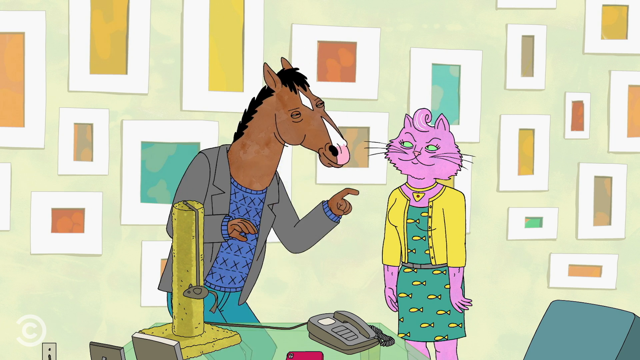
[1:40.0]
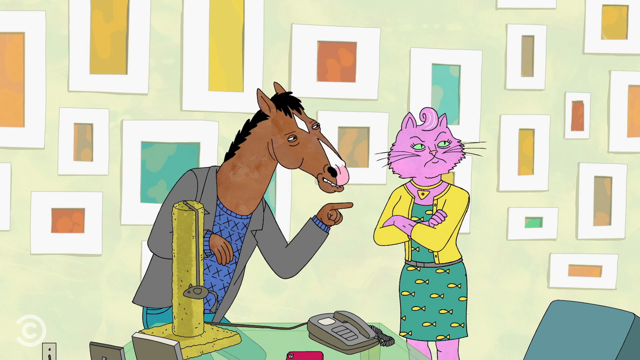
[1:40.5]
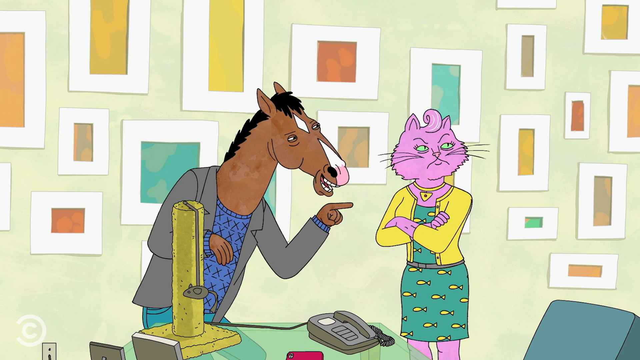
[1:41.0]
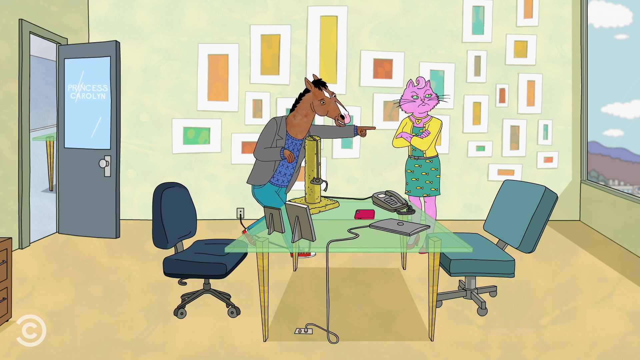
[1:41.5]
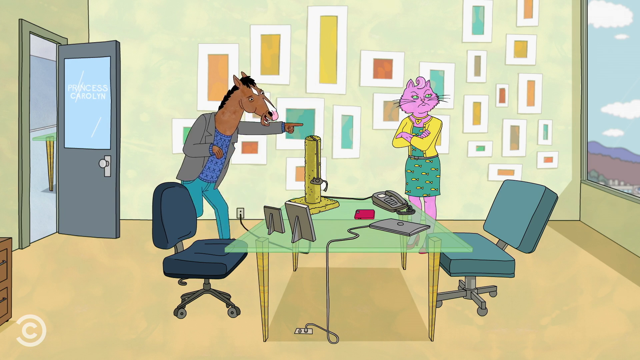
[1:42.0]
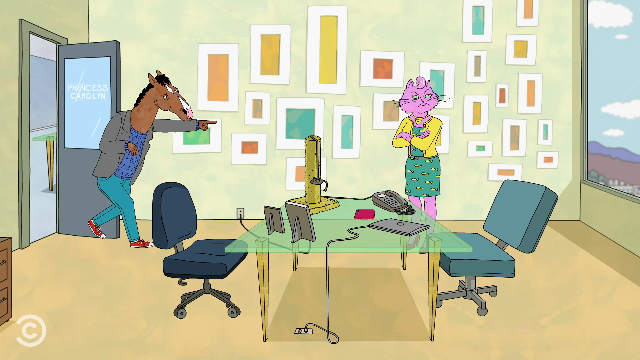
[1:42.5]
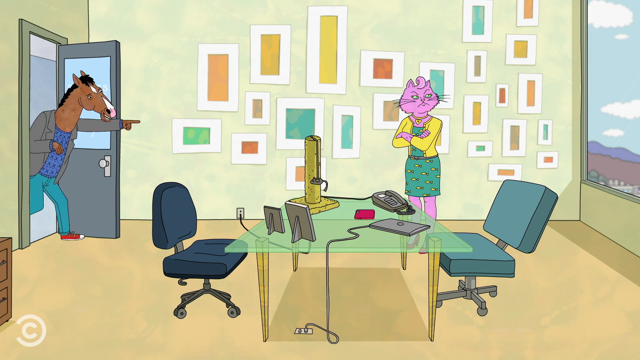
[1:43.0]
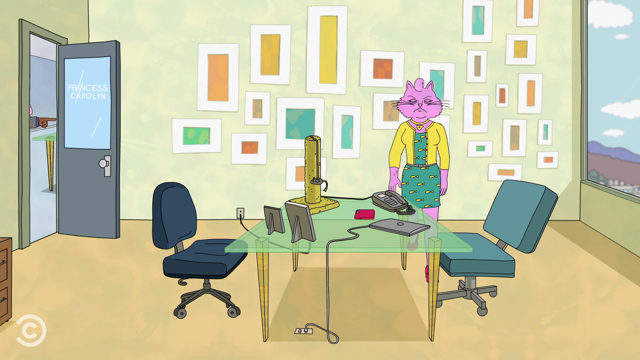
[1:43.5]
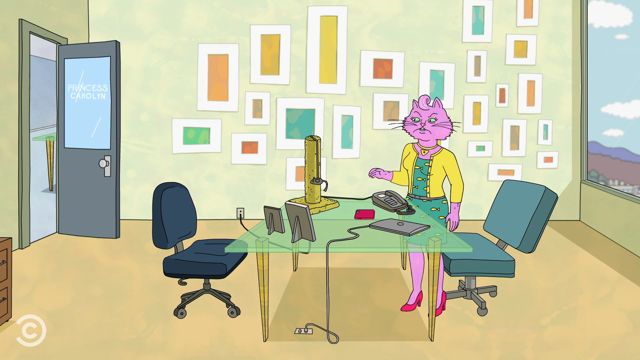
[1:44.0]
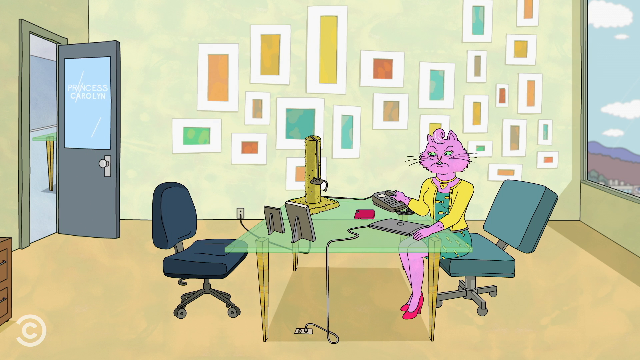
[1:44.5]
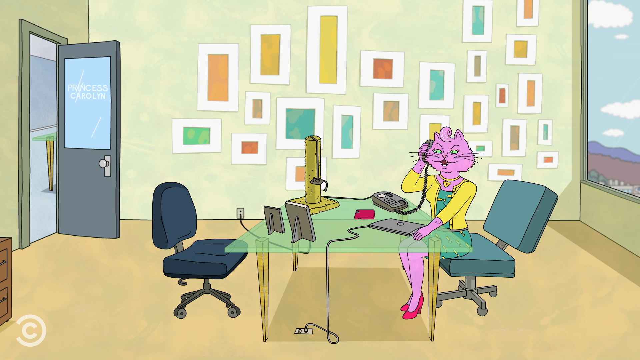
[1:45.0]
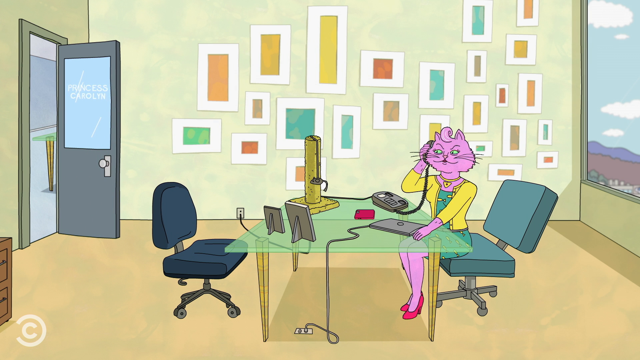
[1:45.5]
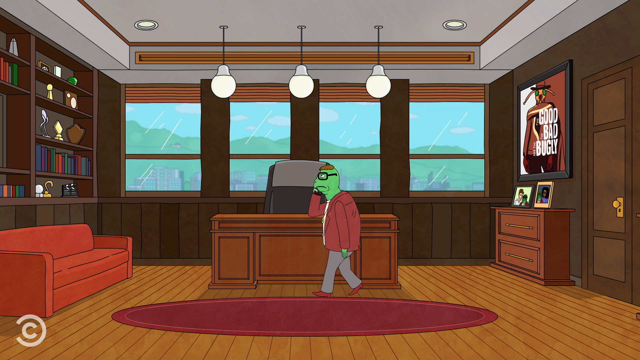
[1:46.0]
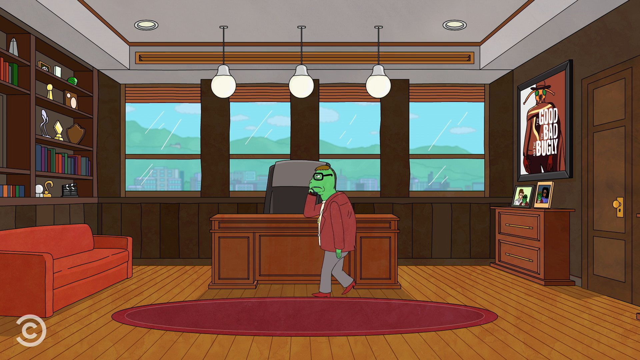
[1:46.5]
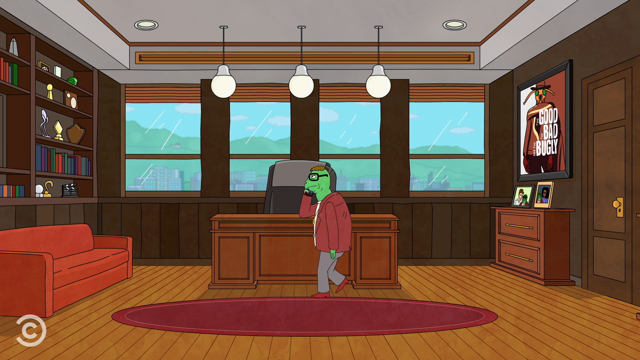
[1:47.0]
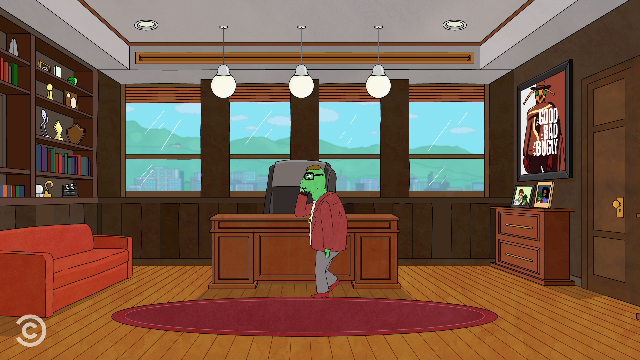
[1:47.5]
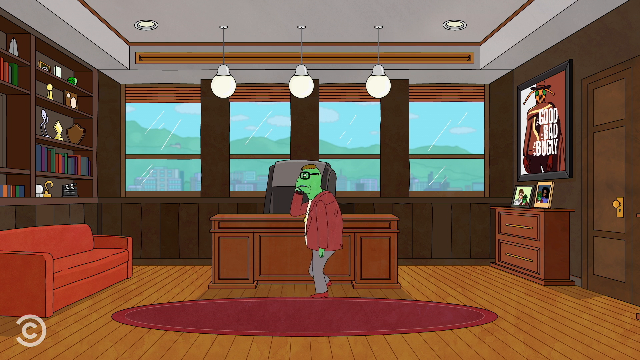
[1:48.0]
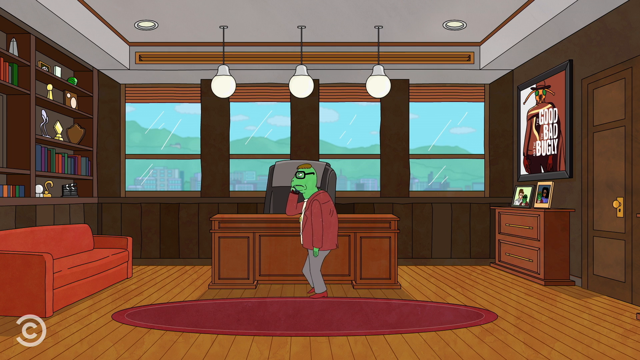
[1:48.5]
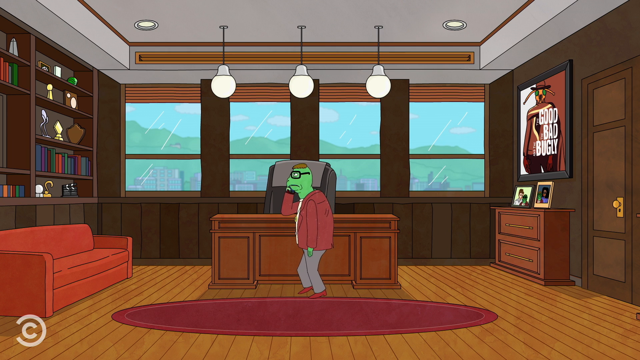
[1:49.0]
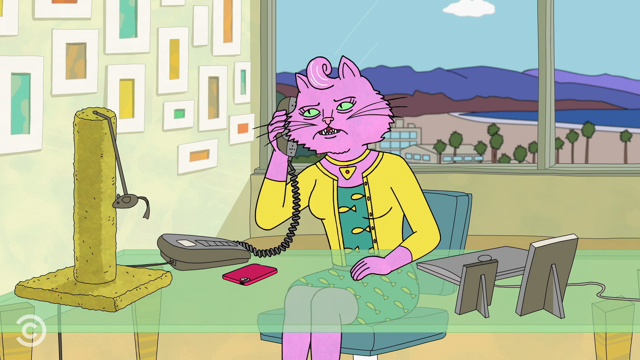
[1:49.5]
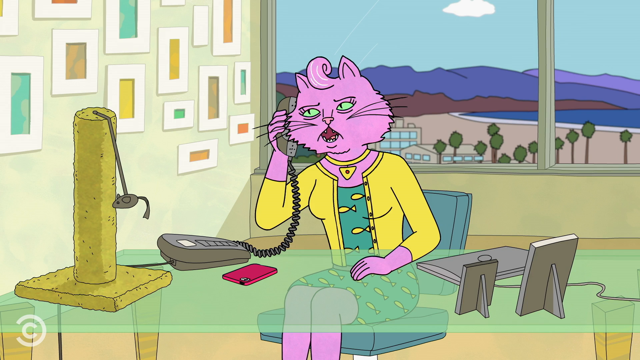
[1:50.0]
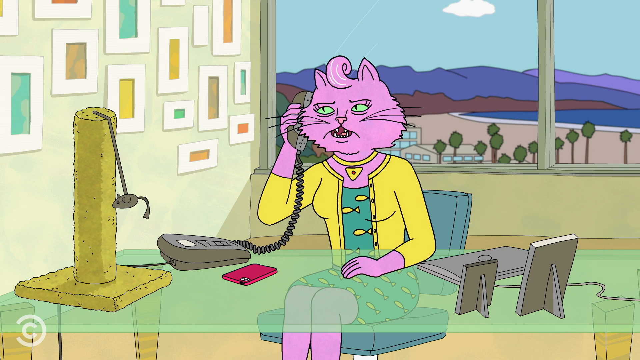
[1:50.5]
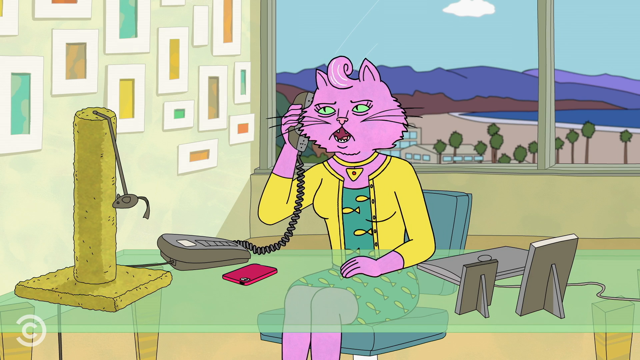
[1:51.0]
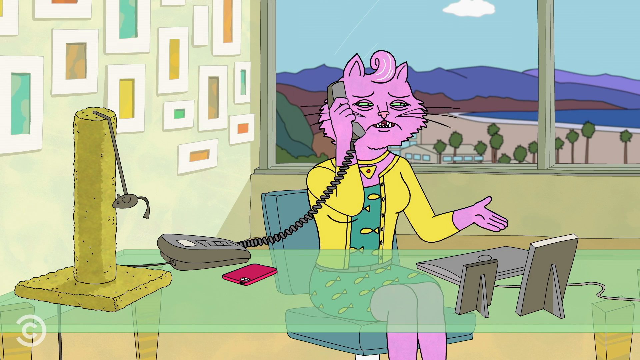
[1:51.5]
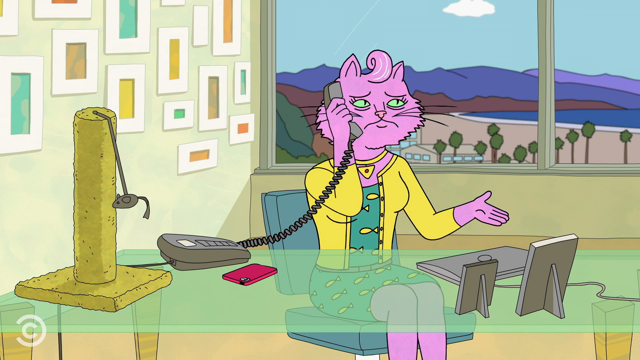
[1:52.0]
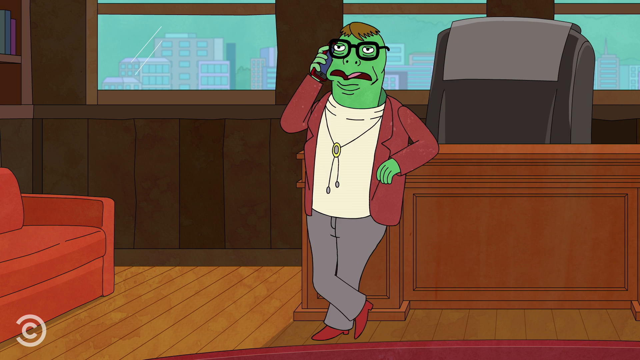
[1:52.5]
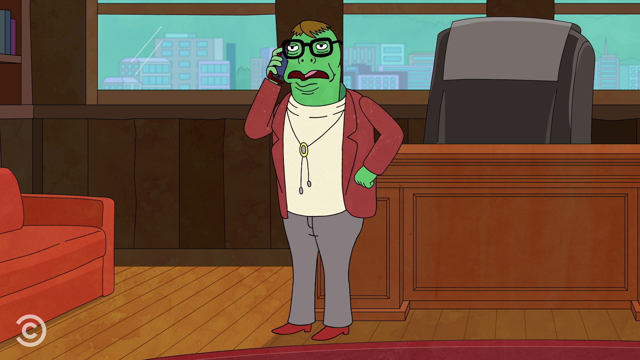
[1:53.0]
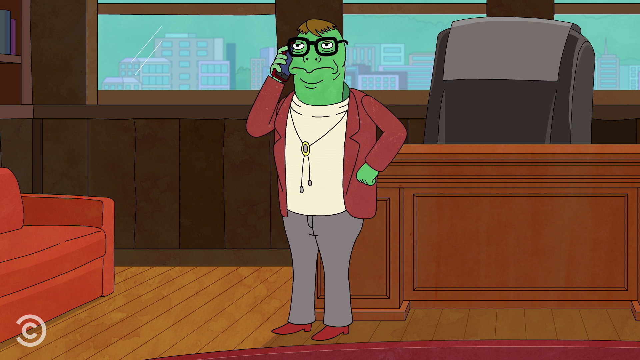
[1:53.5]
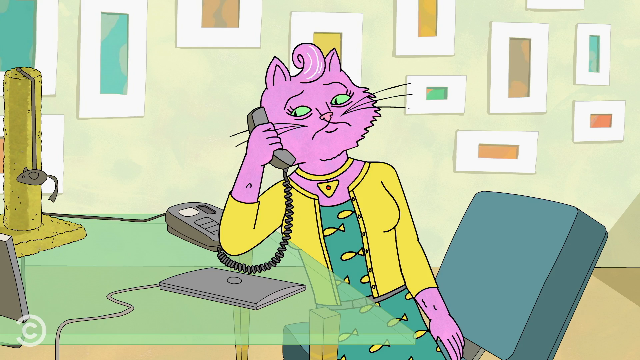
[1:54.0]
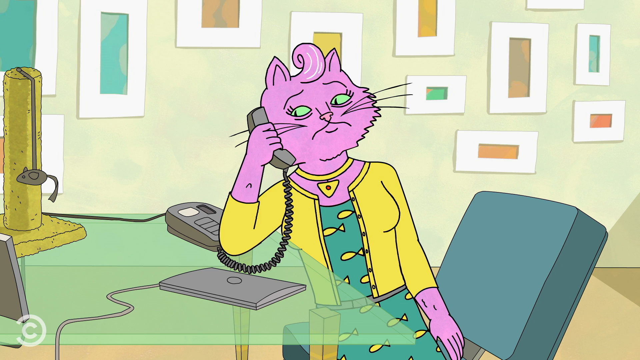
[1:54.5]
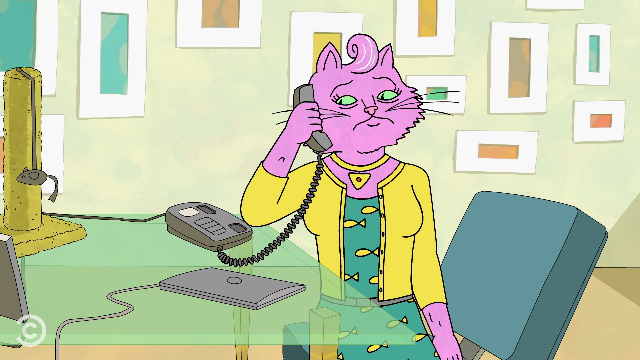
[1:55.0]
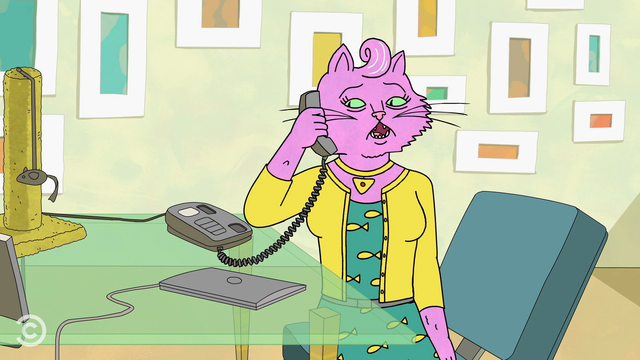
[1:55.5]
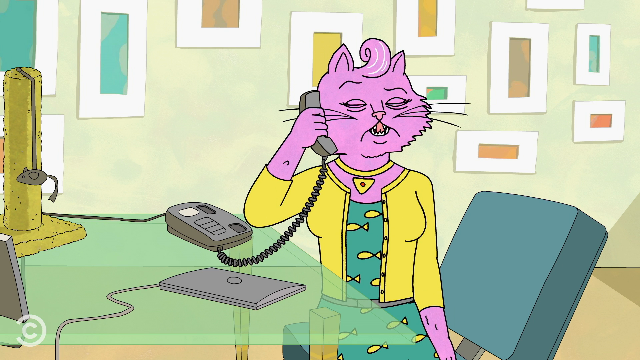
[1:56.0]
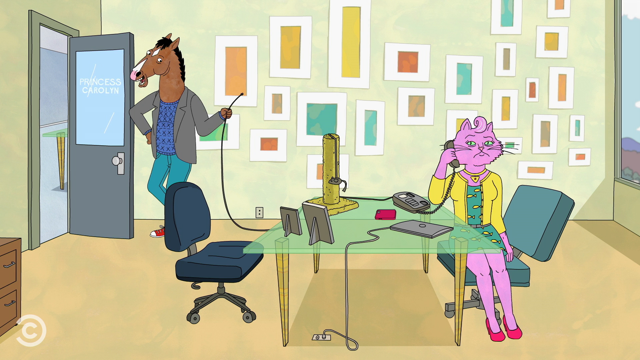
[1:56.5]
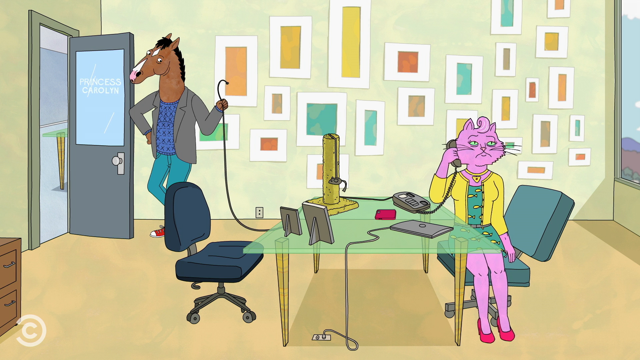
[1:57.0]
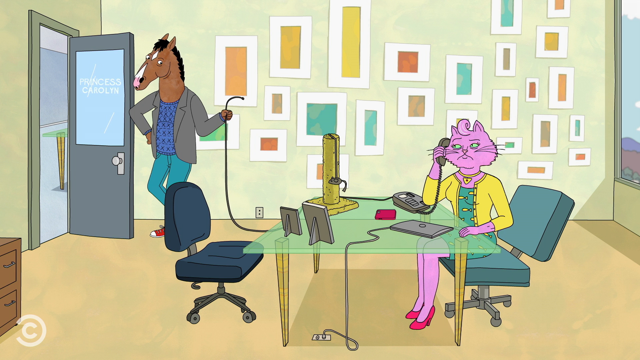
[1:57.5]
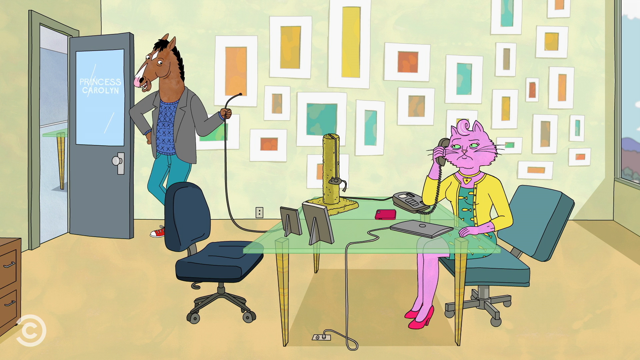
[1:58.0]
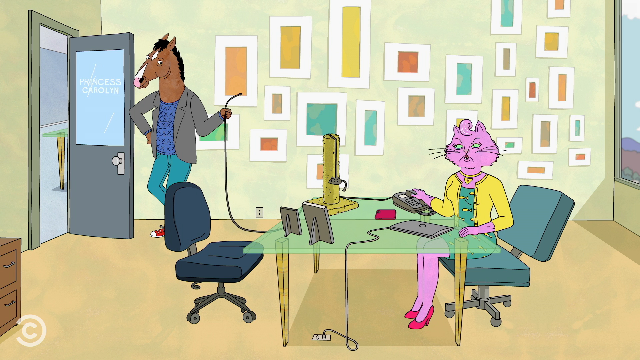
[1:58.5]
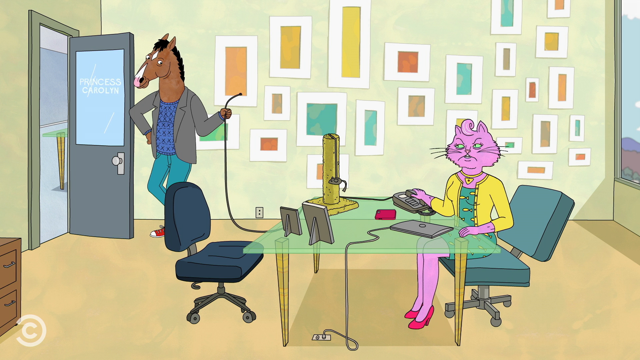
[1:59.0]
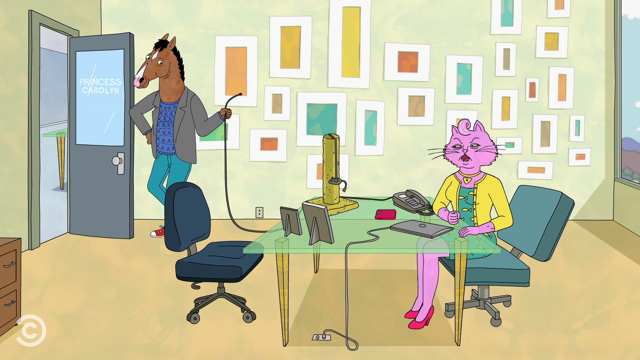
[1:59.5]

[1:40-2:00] The horse bows down and points at the cat, who folds her arms and looks away. He walks backwards as the view pans out to show the whole office, pointing at the cat as he backs toward the office door, and exits. The cat unfolds her arms, walks to the table, sits down and picks up the telephone. The scene cuts to someone in an office with wood cladding on the walls, walking in front of a desk with a black chair while talking. There is a red sofa, bookcases with books and trophies on the left, four windows at the back, and three white lamps on the ceiling. To the right is a poster reading "Good, Bad, Ugly", with a set of drawers with photo frames beneath it and the office door to the right of that. The video cuts back and forth between the cat talking on the phone, her hand resting on the table, and the person in the office. The cat looks unimpressed and seems unable to hear the other person. A wider shot of the office shows the horse standing and holding the telephone wire, which he has unplugged from the wall. The cat slams the phone down, and the horse looks at her.